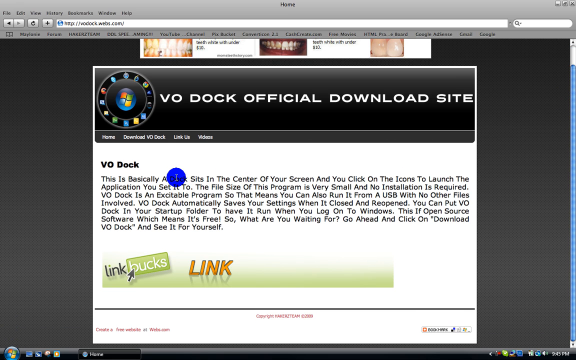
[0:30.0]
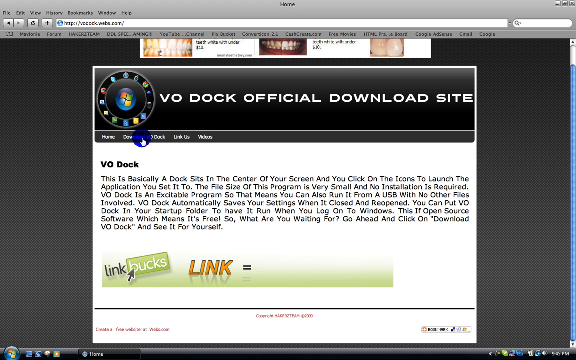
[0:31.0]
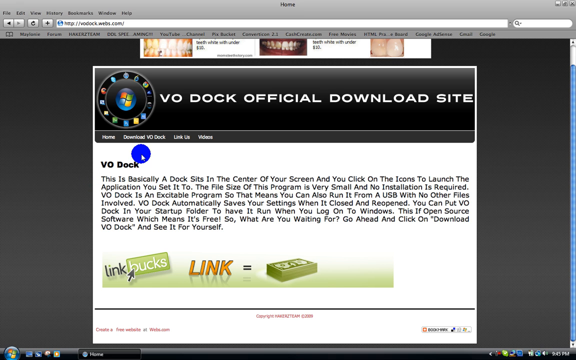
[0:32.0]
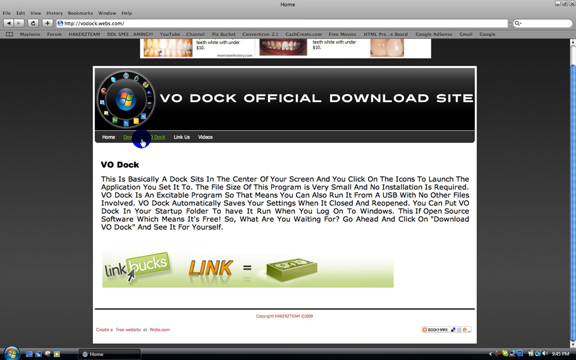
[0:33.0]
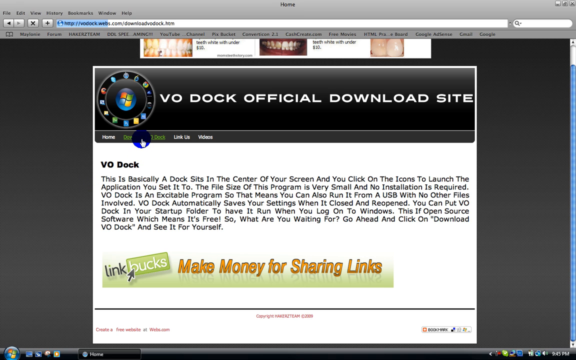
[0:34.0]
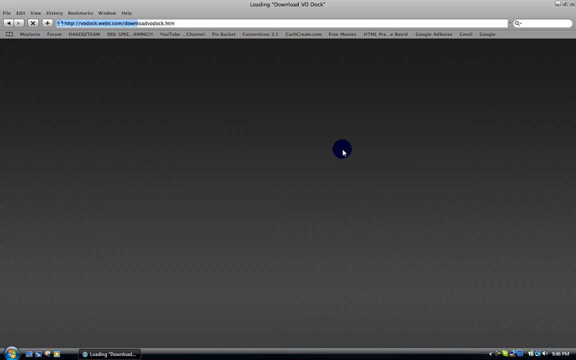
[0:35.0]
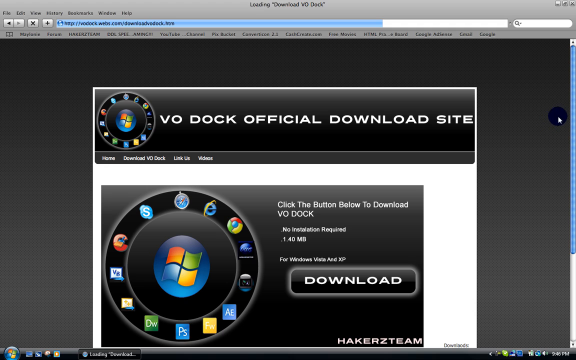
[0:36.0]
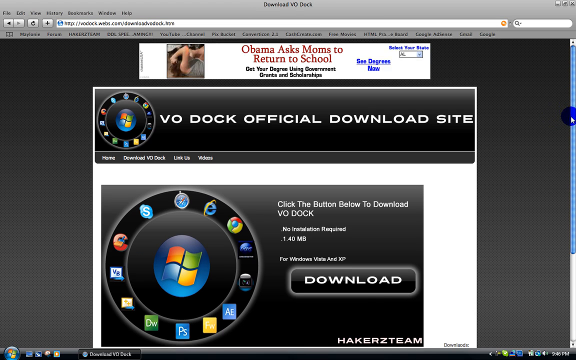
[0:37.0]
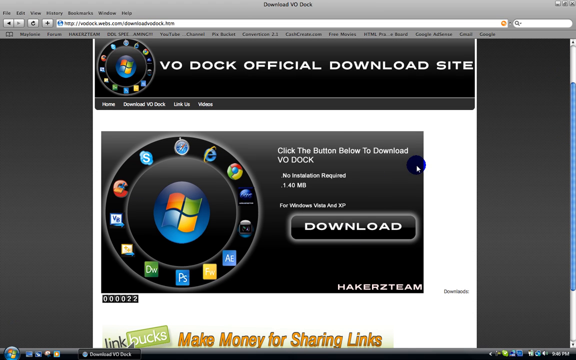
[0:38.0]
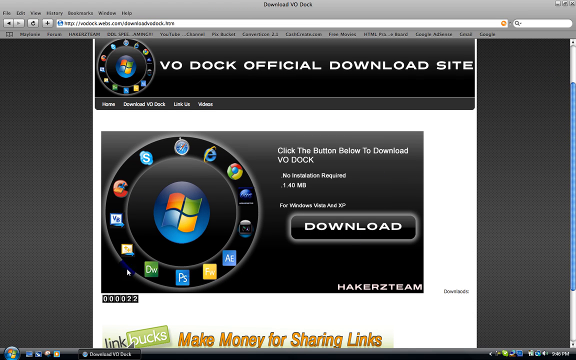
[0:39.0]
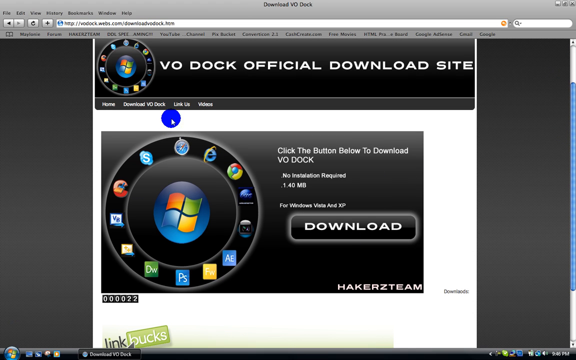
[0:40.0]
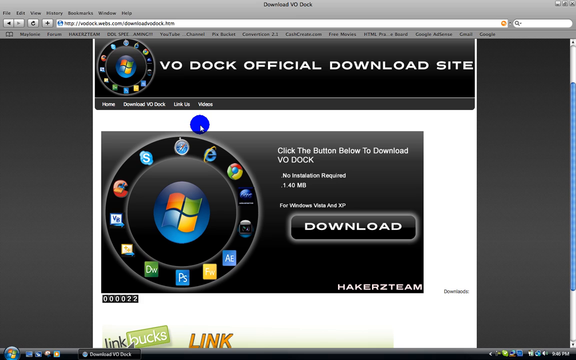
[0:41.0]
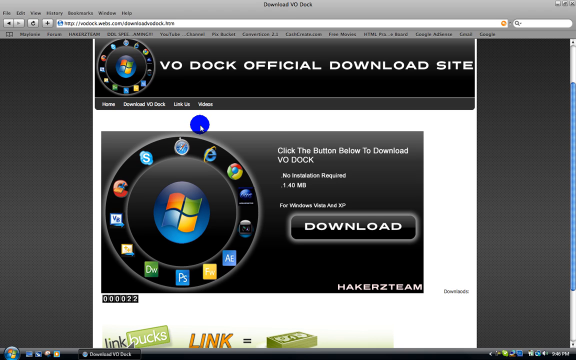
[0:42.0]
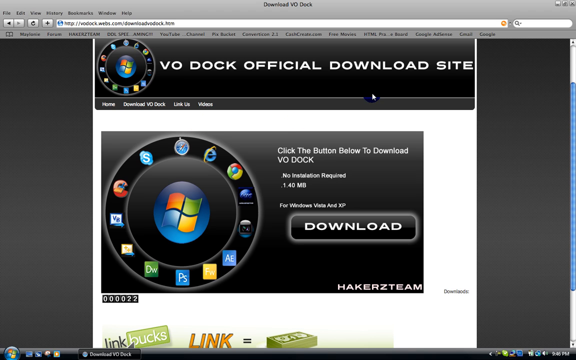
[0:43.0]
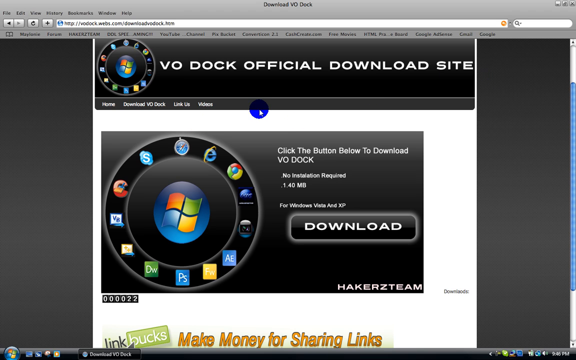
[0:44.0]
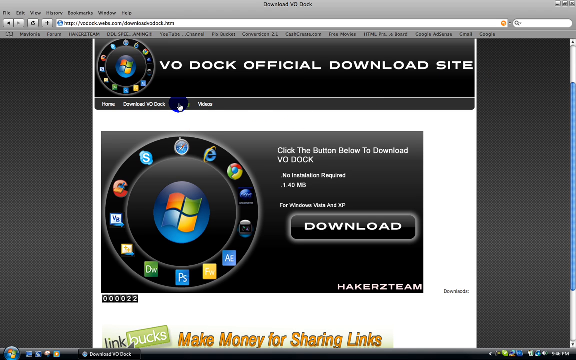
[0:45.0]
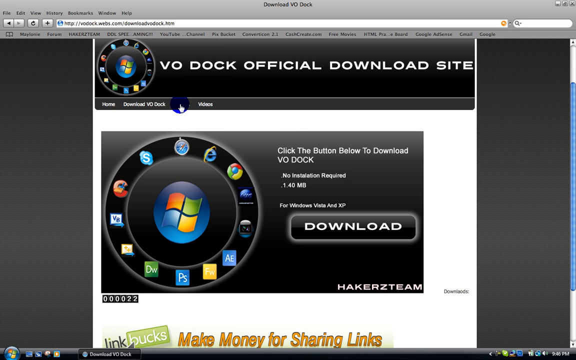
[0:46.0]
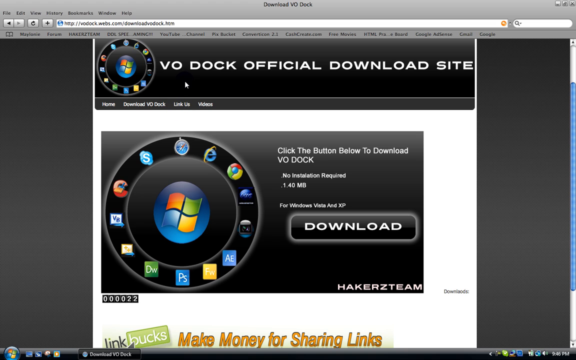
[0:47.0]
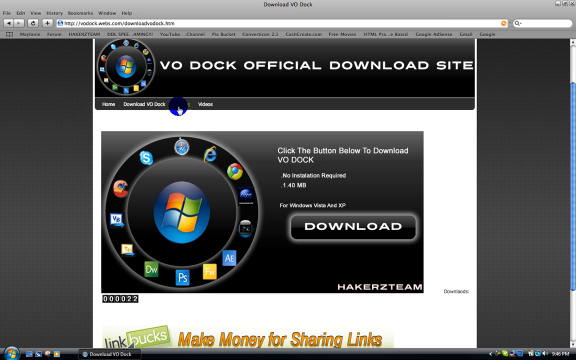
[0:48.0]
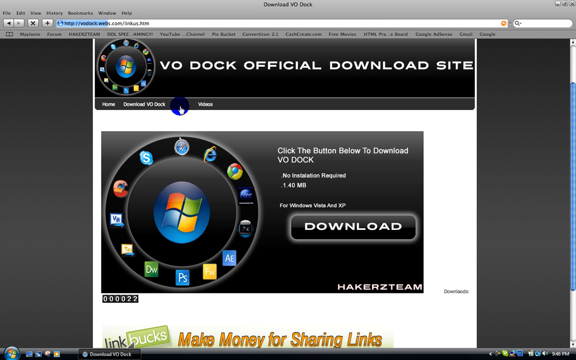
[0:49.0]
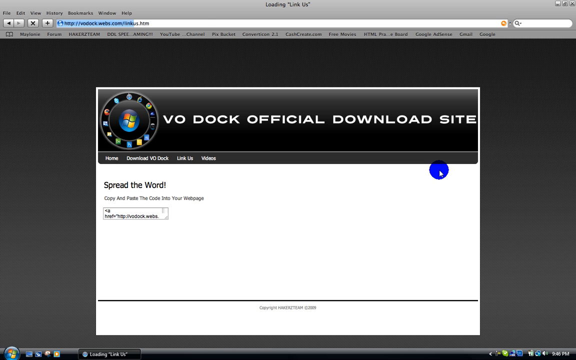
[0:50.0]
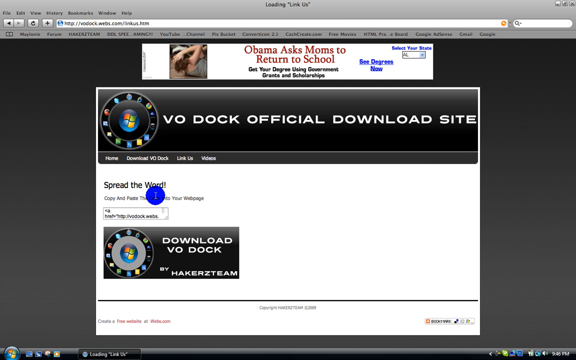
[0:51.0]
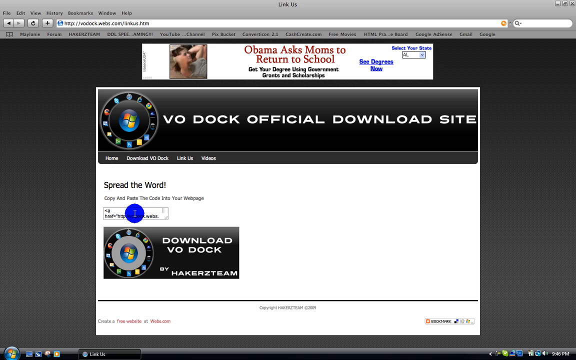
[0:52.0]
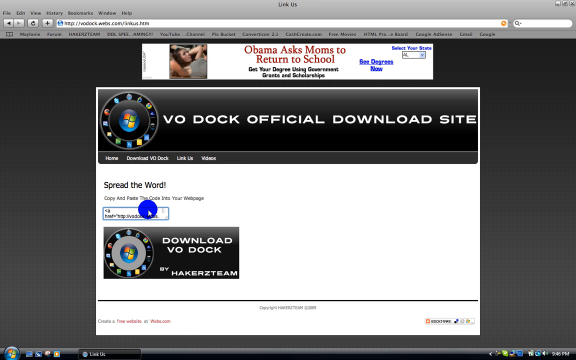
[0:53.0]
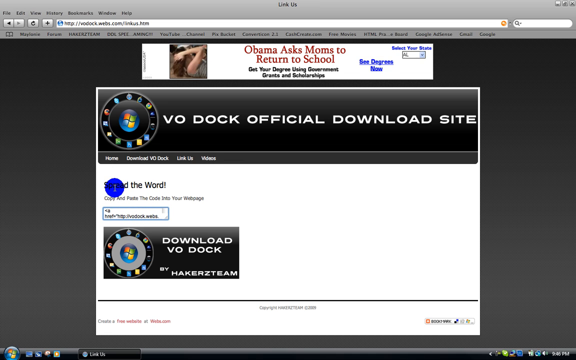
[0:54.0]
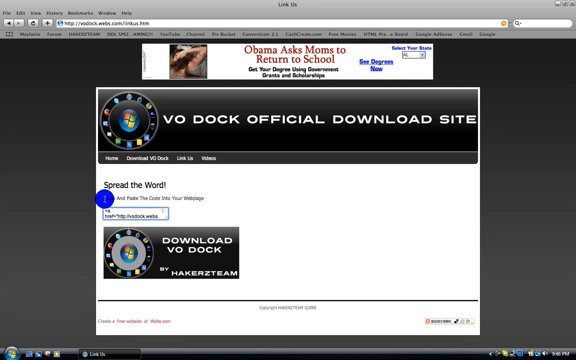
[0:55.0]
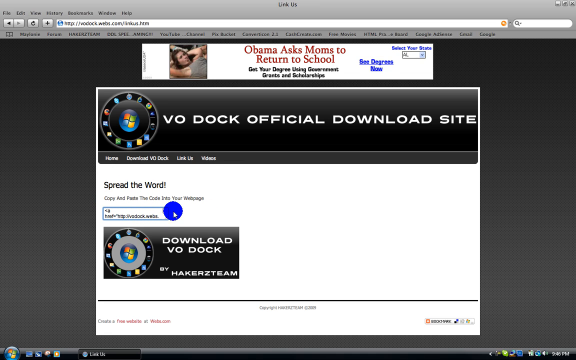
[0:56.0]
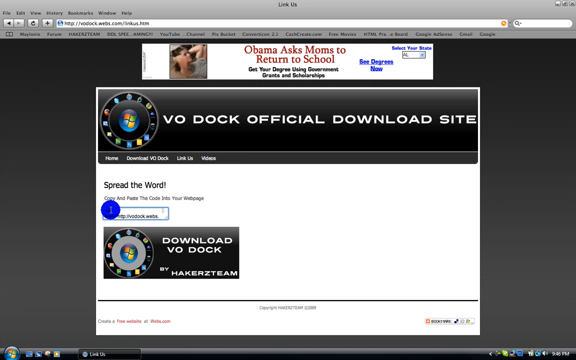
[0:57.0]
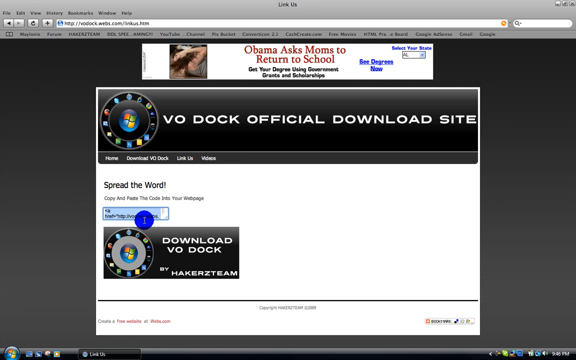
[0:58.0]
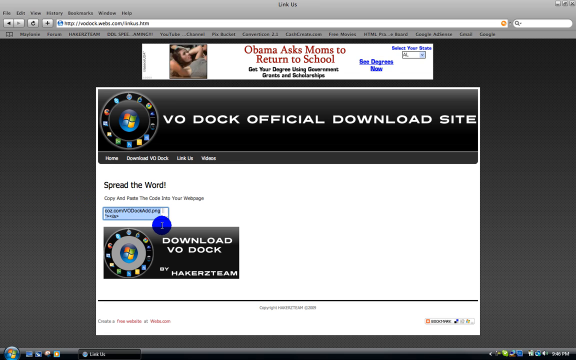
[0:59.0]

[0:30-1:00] Safari shows the VO DOCK official download site, with a paragraph below explaining what the site is about. Below that is a box with a light pista green background. Linkbuck, with bucks on a green box and a black arrow pointing toward it, is followed by "LINK" in big orange capital letters, an "=" sign, and green paper currency, which transitions to "make money for sharing links". The mouse pointer with a blue circle moves, and the download tab below the heading is clicked. The page loads, indicated by a light blue loader on the URL, and the download page opens. It has a black background with the VO DOCK official download site header, above which an ad stating "Obama asks moms to return to school" is running. A download button is below the header, with the Windows icon surrounded by various icons in a circle to its left. The page is scrolled down and the mouse pointer hovers over the main screen, moving left and right. The third tab in the header band below the VO DOCK official download site header, "link", is clicked, opening "spread the word copy code into webpages". The code is selected with the mouse pointer and copied, indicated by a blue selection.